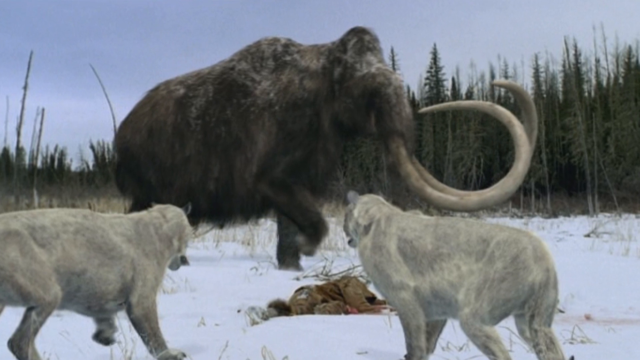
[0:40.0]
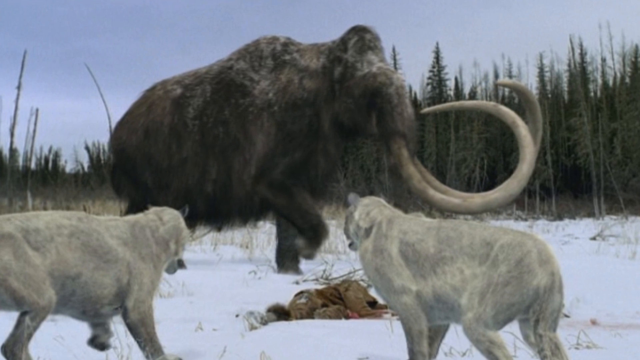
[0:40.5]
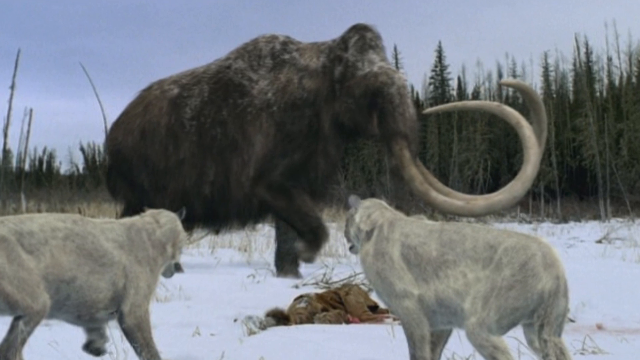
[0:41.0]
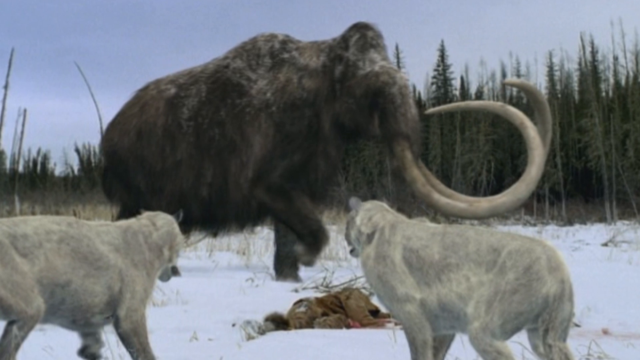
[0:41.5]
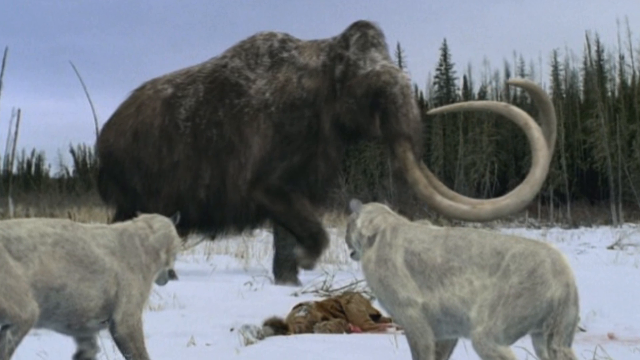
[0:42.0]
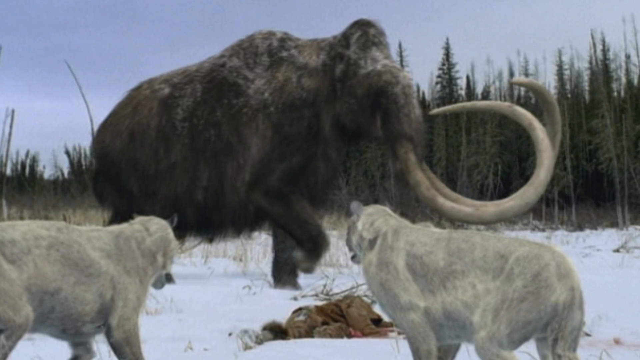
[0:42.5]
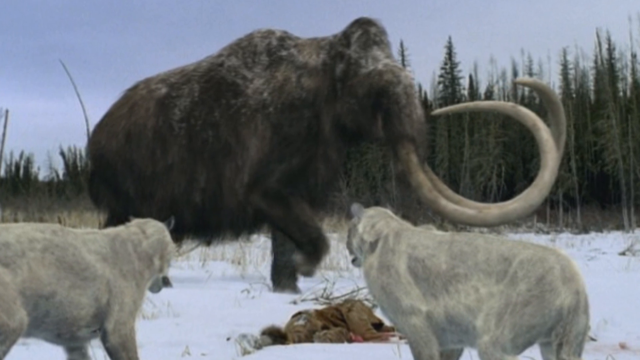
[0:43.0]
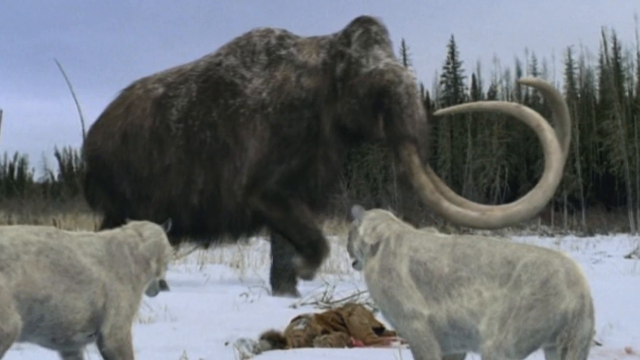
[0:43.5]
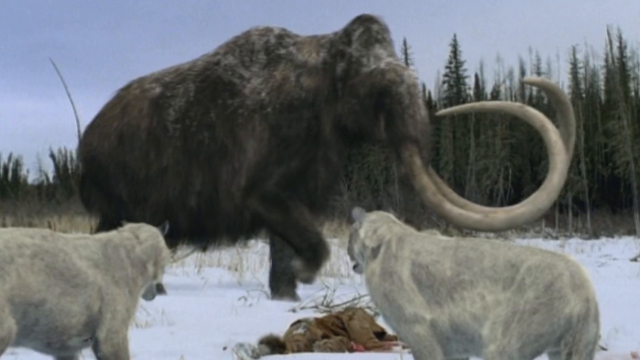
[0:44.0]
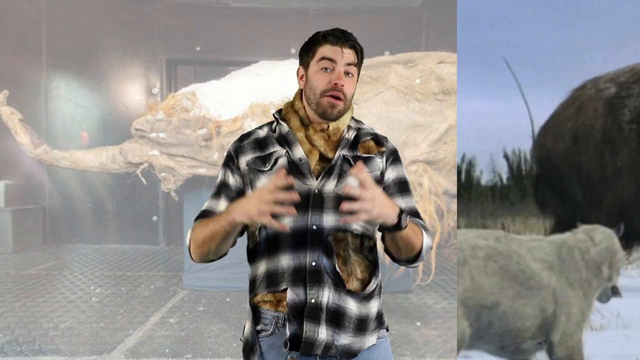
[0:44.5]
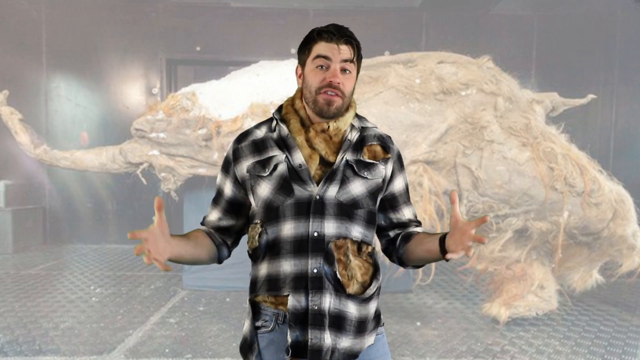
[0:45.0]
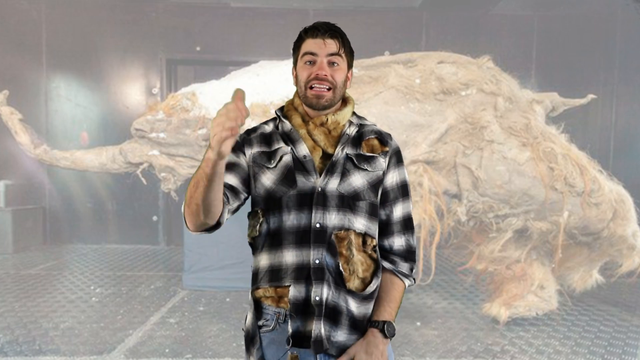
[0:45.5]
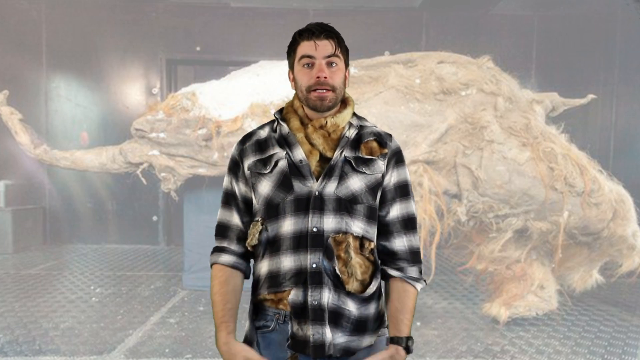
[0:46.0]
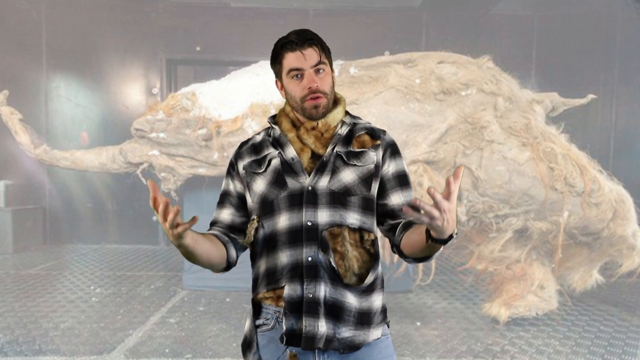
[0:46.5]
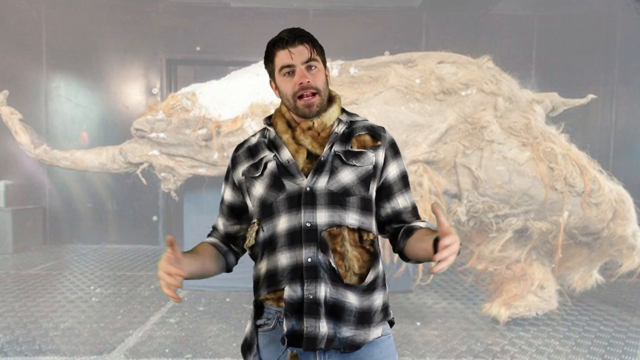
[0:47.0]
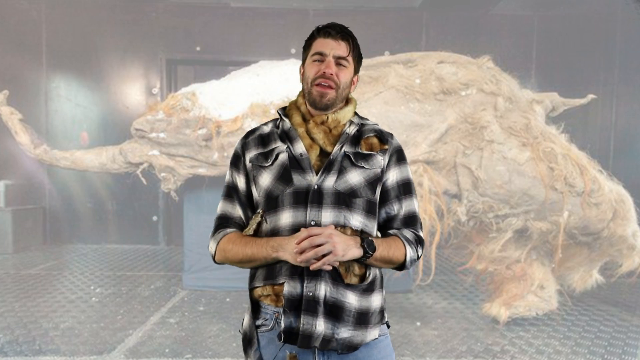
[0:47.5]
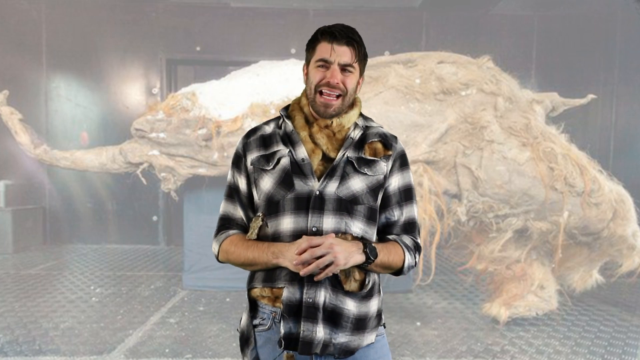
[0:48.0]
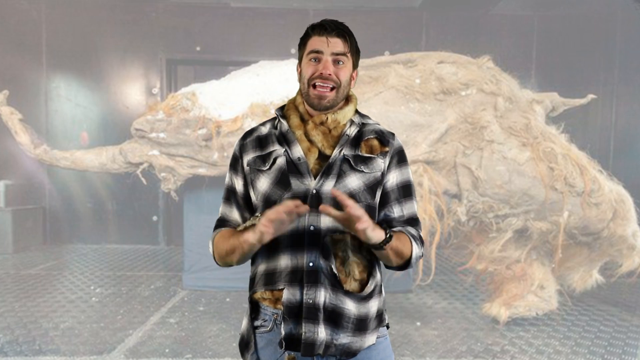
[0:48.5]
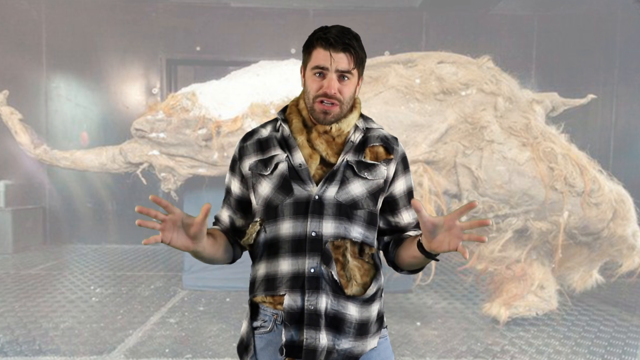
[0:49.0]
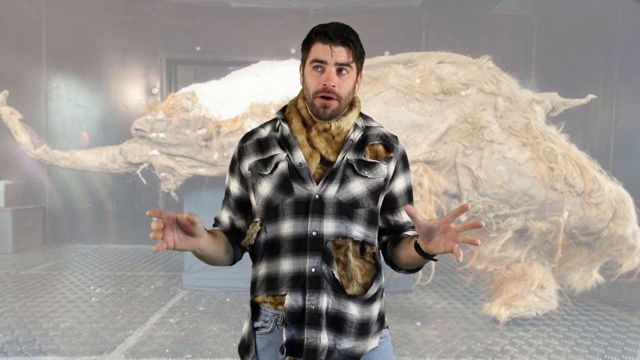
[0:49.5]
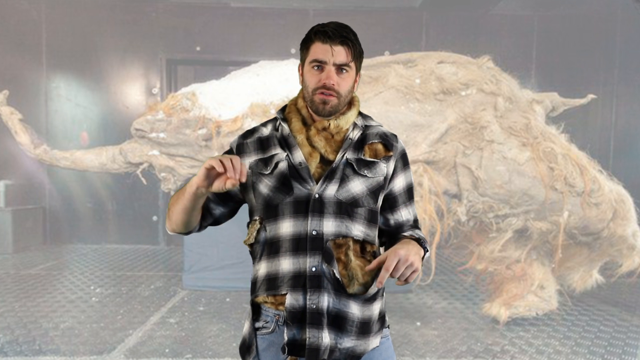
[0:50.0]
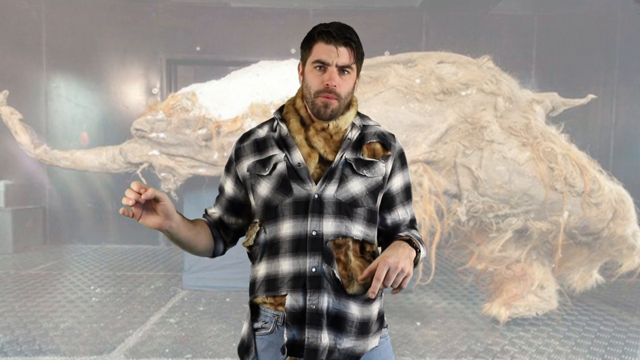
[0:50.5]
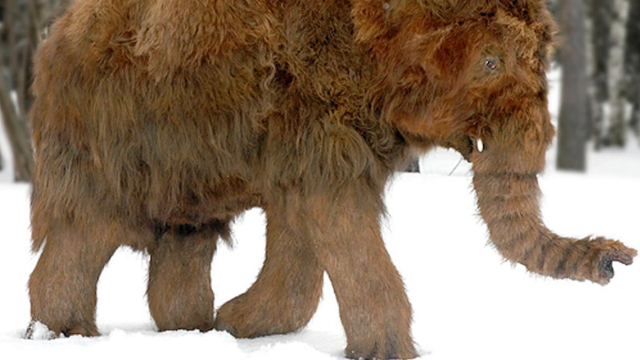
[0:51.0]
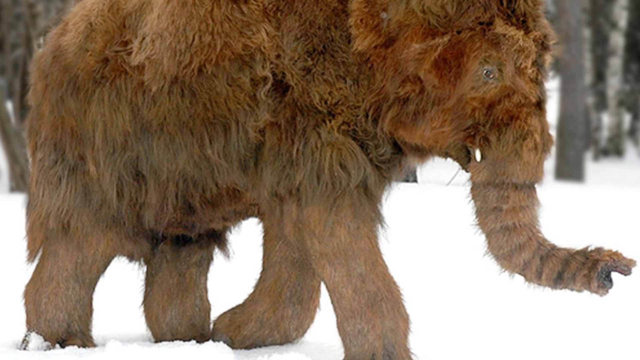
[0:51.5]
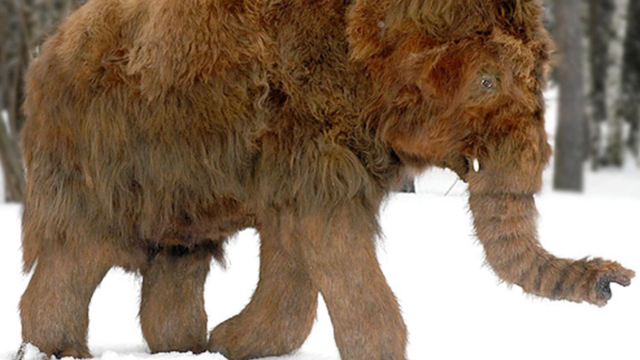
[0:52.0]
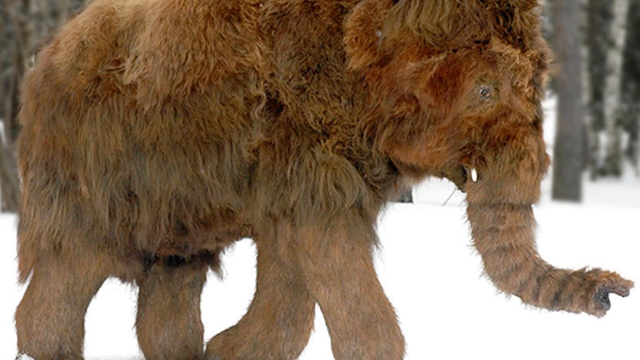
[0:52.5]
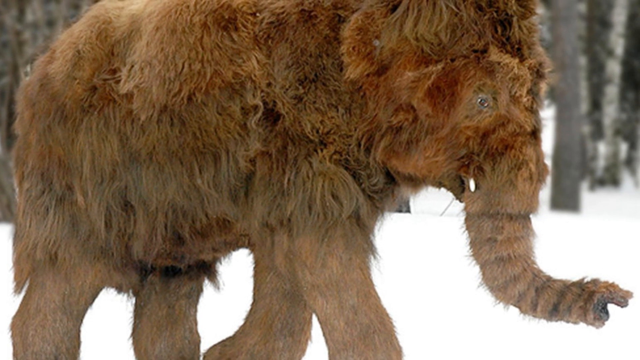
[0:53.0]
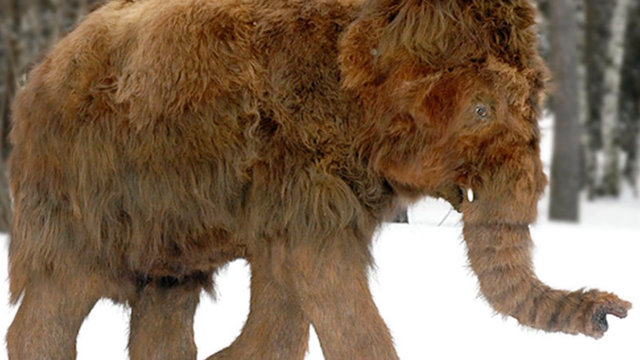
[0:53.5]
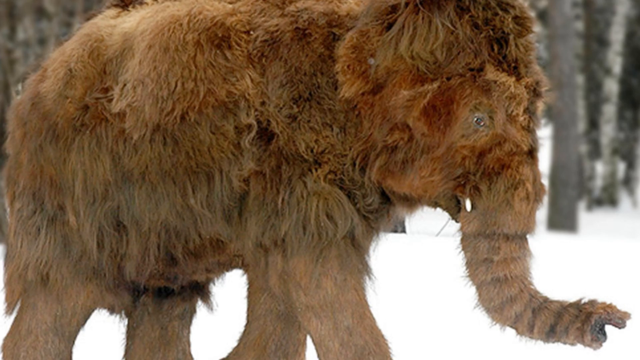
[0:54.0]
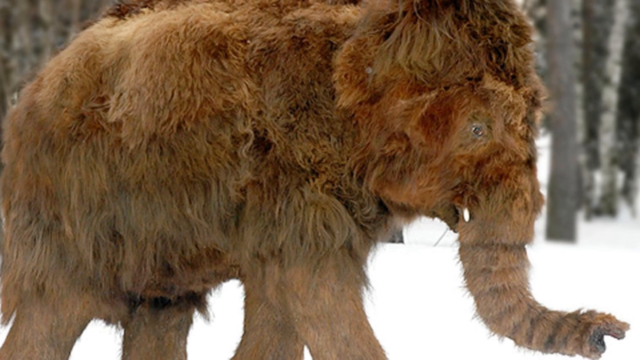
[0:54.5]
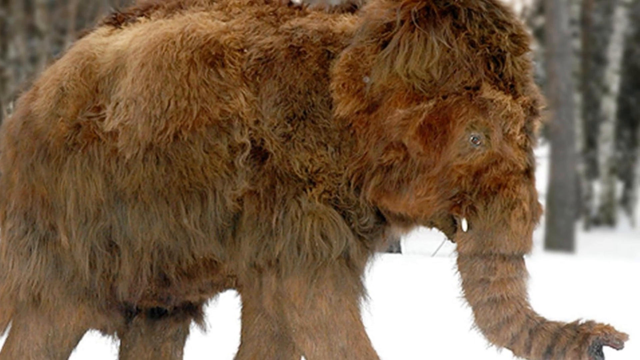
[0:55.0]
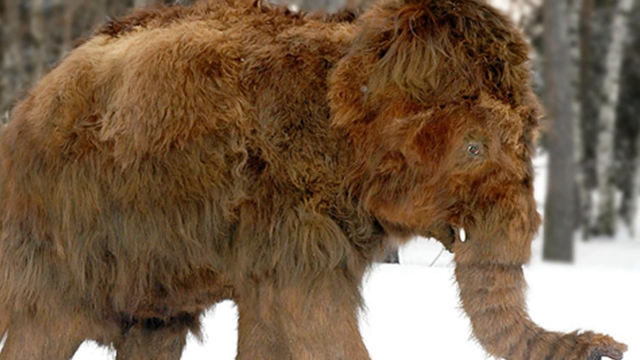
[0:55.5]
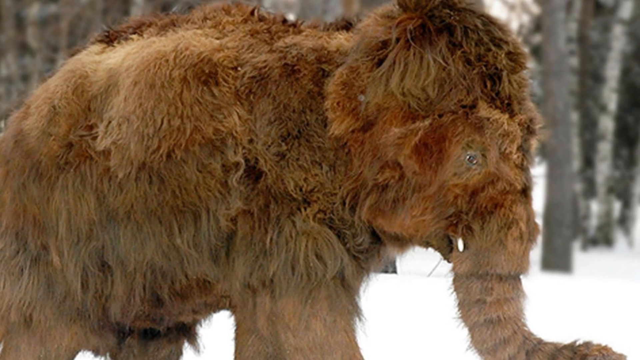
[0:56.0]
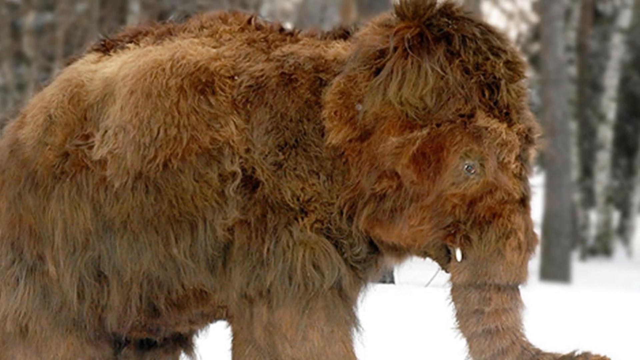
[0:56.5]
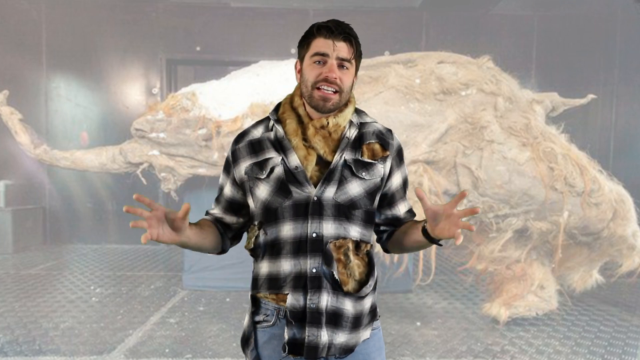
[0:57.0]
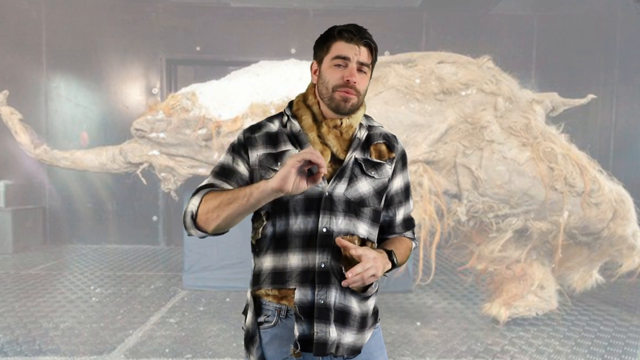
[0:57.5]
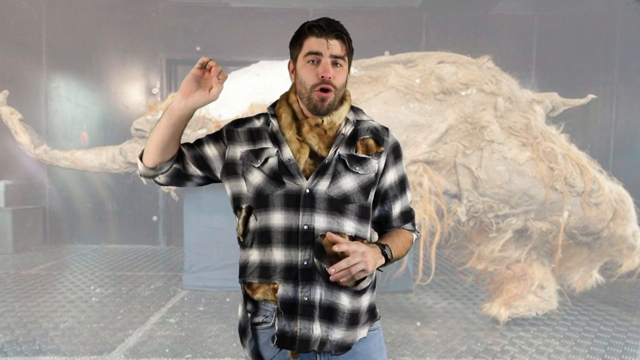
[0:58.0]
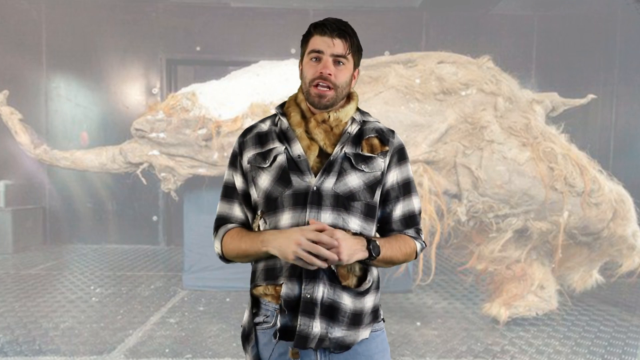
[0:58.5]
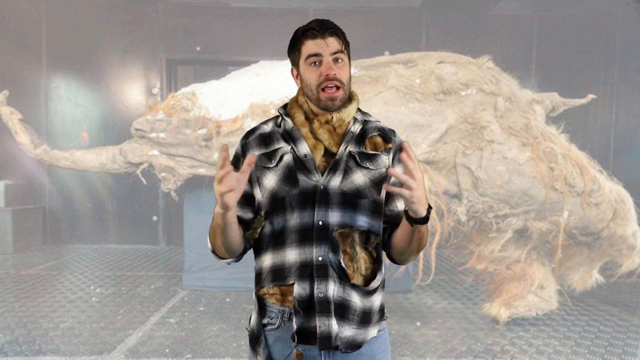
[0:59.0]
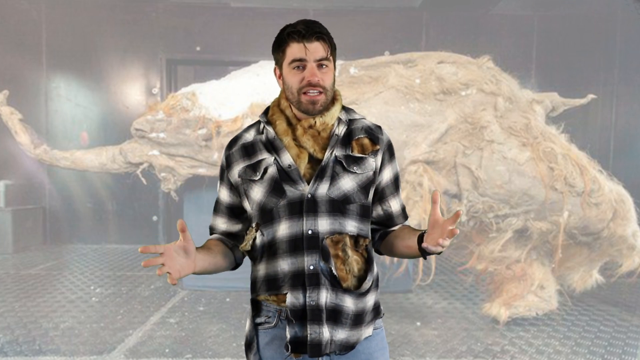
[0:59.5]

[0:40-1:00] The view zooms in a little more slowly on the mammoth. Two white creatures, possibly bears, are at the mammoth's feet, looking toward the center of the image where the mammoth towers over both of them; one is somewhat off screen to the left, and the other is very visible in the center-right portion of the screen. There are many trees in the background, the sky looks cloudy, and there is a lot of snow on the ground. The video cuts back to Michael, still using a lot of hand gestures, and he shows another image of a woolly mammoth, this time apparently a baby one with brown fur. It then cuts back to him, still making many hand movements. He is apparently showing a woolly mammoth and a recreation, possibly digital, of what the fossil behind him is.